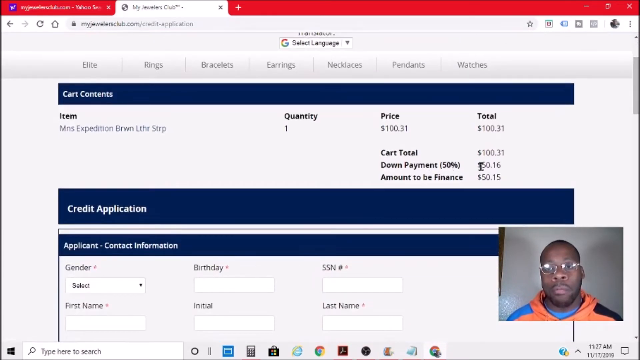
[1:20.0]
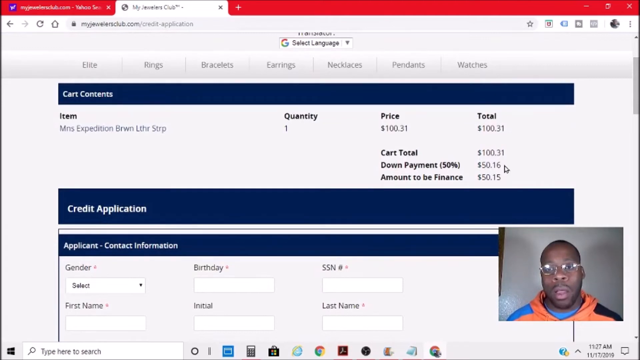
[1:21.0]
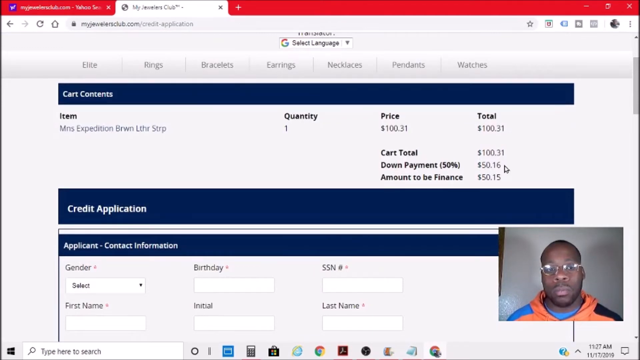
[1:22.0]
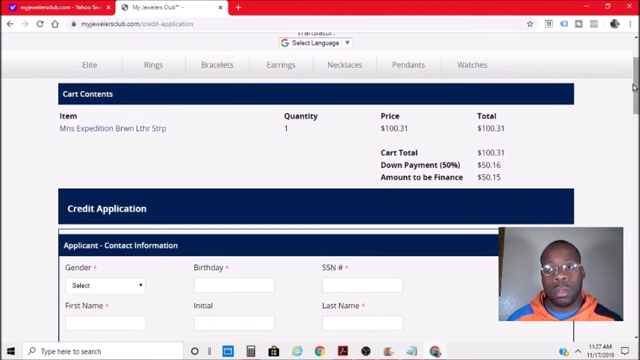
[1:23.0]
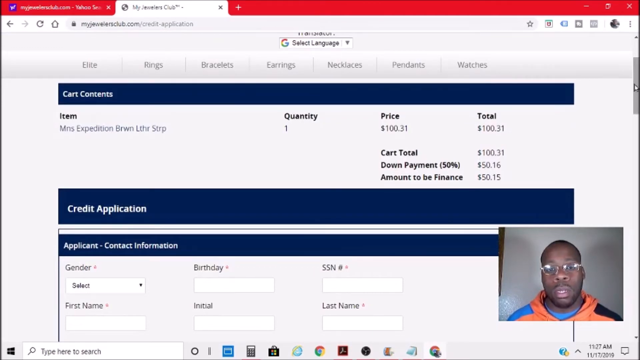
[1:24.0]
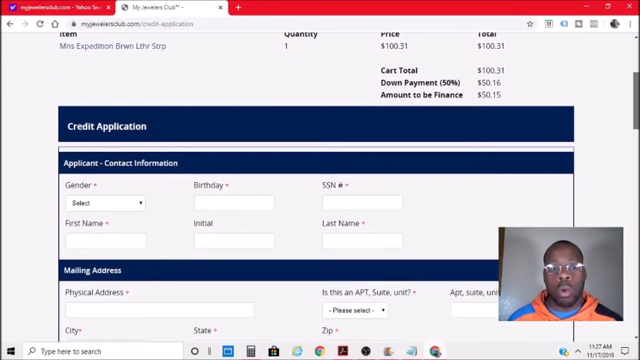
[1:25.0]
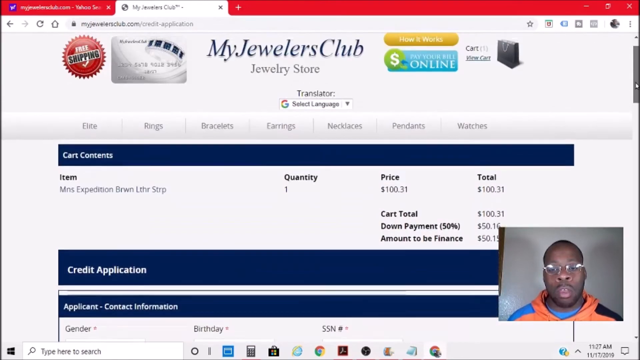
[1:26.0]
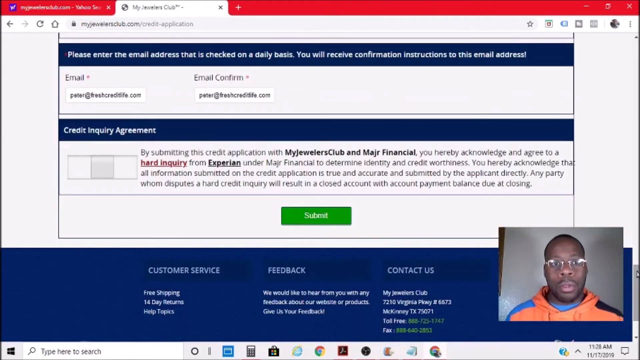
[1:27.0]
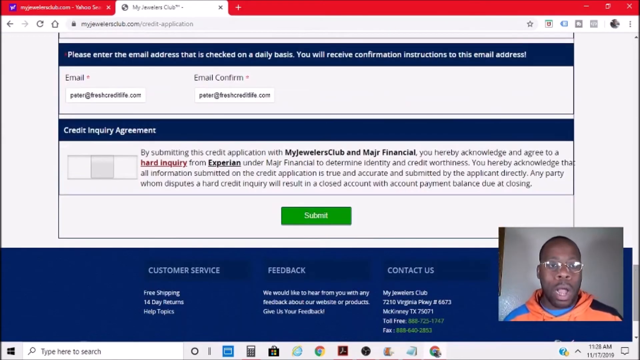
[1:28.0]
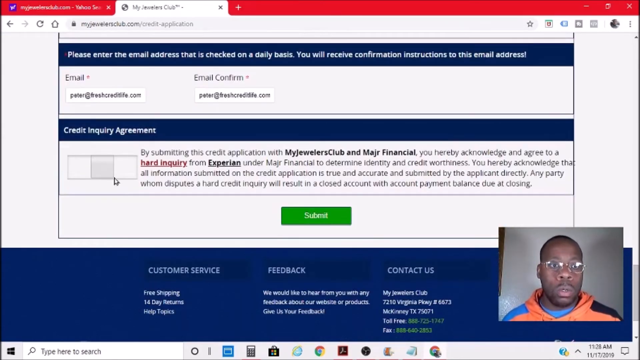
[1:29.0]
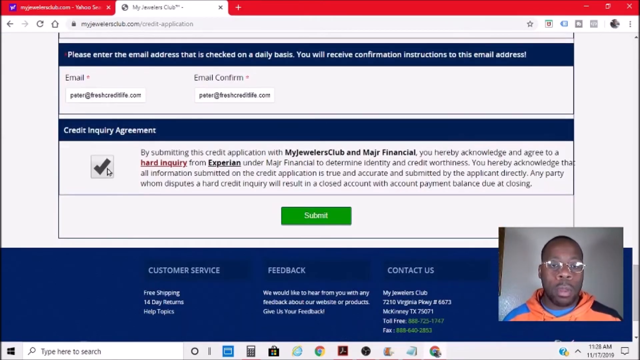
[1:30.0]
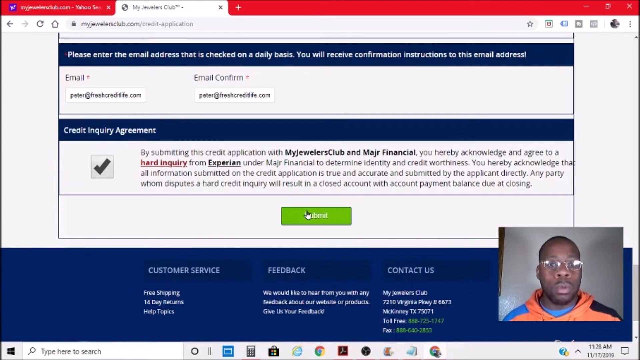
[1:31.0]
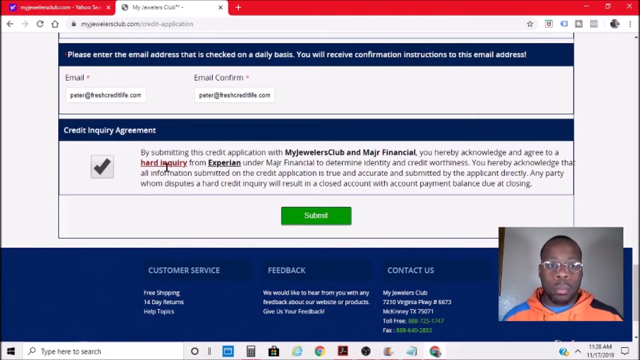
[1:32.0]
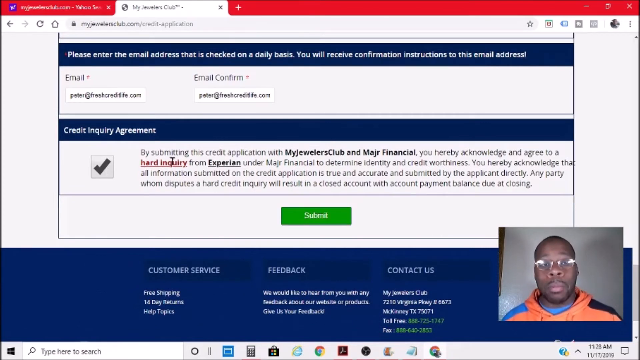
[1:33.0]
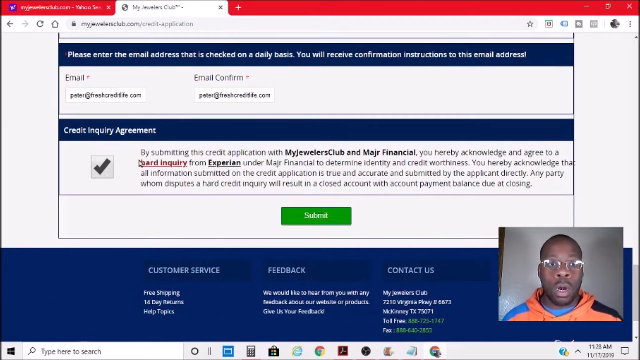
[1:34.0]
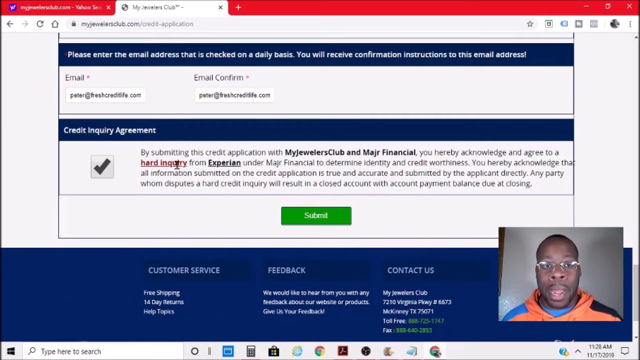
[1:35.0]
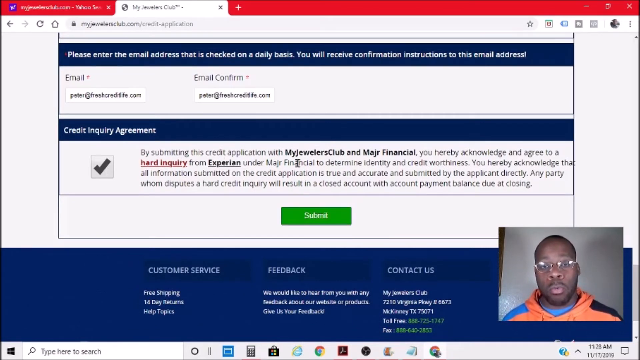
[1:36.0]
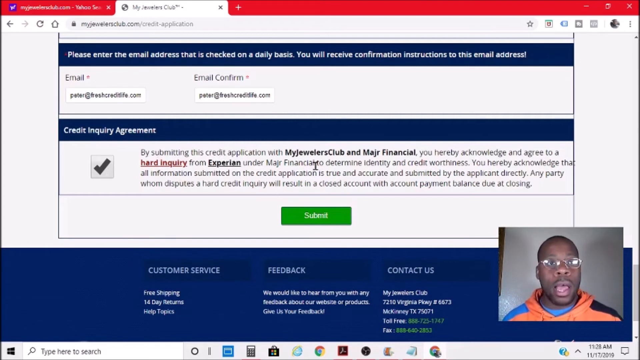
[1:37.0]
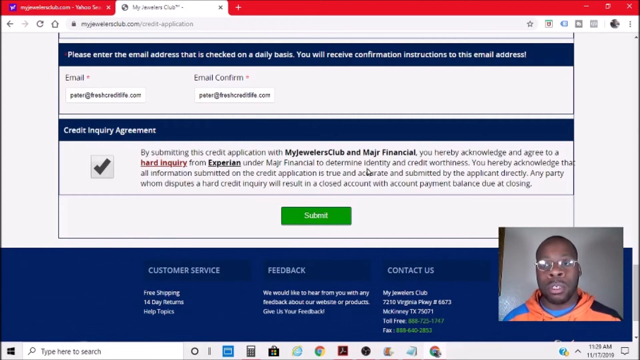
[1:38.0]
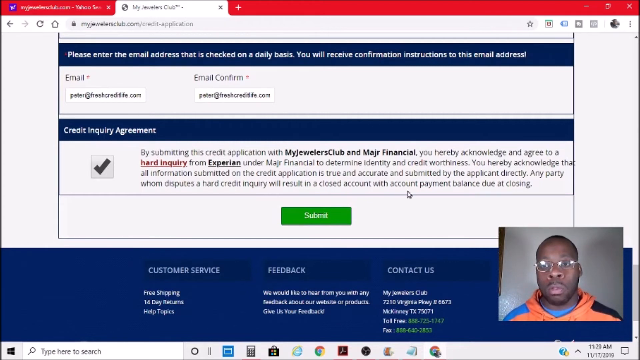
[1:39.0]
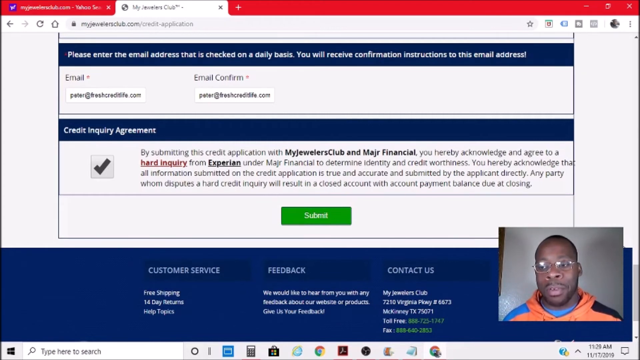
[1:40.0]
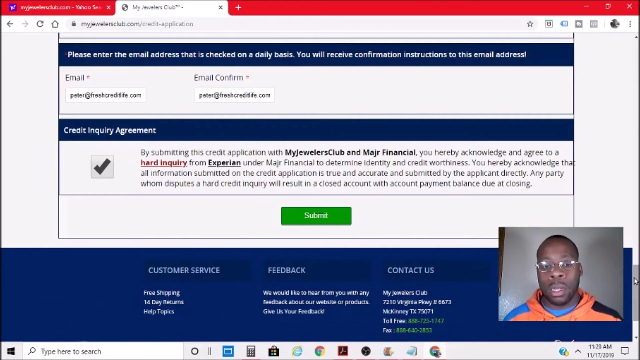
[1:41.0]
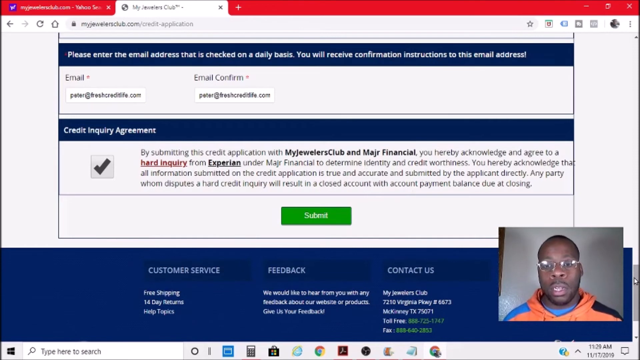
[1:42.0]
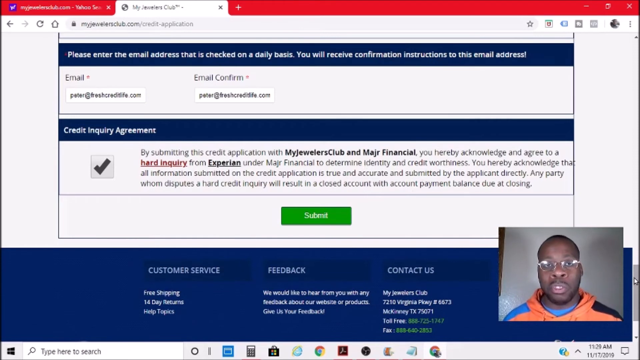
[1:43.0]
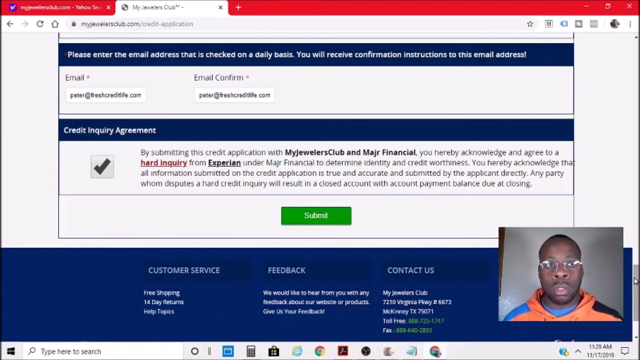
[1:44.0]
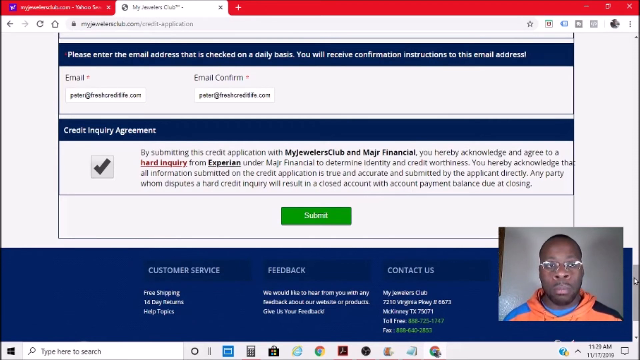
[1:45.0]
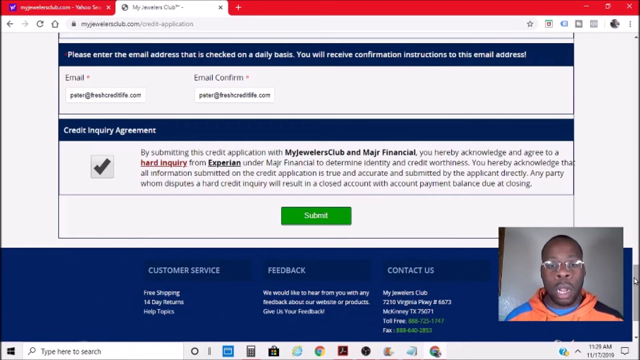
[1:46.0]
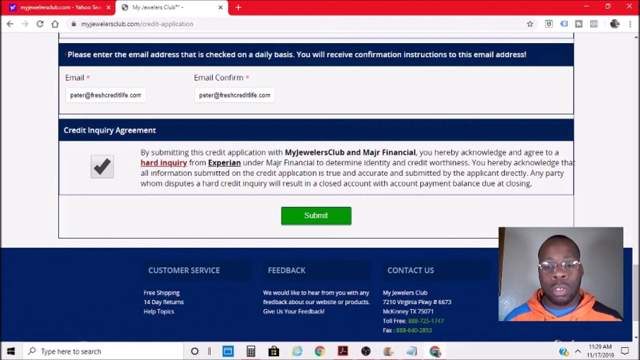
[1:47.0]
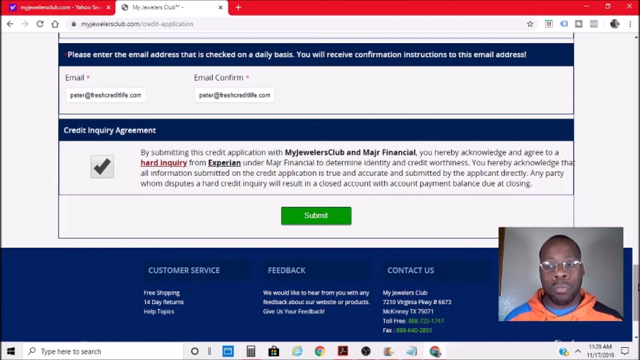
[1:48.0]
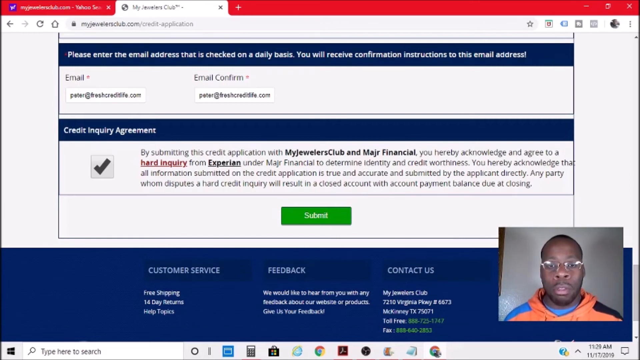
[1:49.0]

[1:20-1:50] The My Jewelry Club website is shown, with a man in glasses and an orange sweatshirt speaking in the lower right-hand corner. Someone scrolls down, finishing the purchase of a watch by submitting a credit application with My Jewelry Club and Major Financial. They have entered their email address and are entering more information. The credit application shows the price of the watch, 50% off as a down payment, and an amount to finance of $50.15. The application asks for gender, birthday, social security number, last name and first name. The cursor hits submit, with text about agreeing to a hard inquiry from Experian.